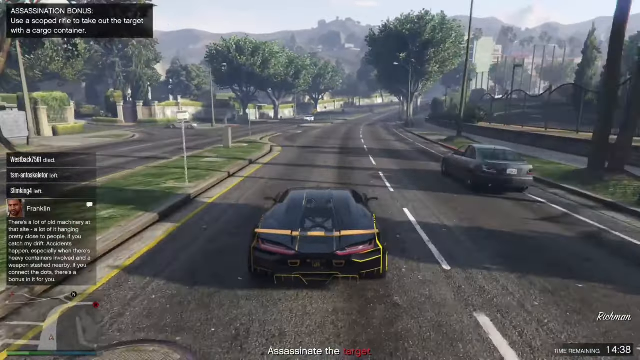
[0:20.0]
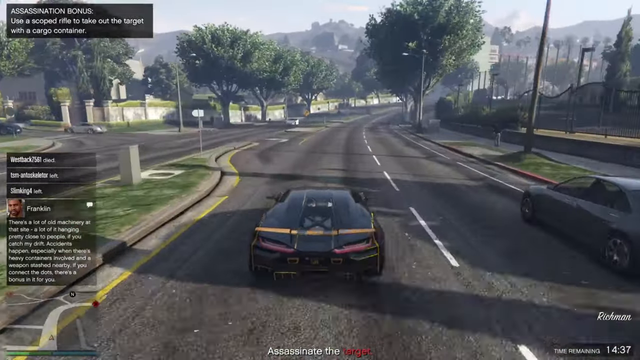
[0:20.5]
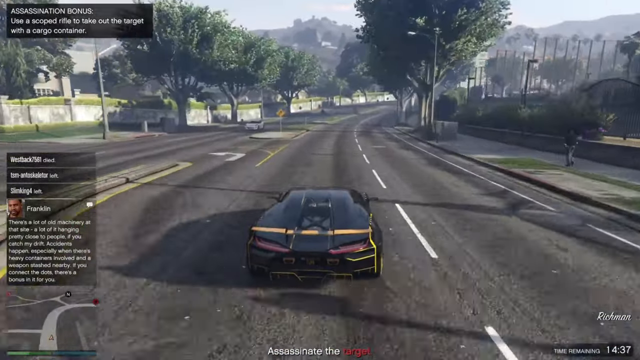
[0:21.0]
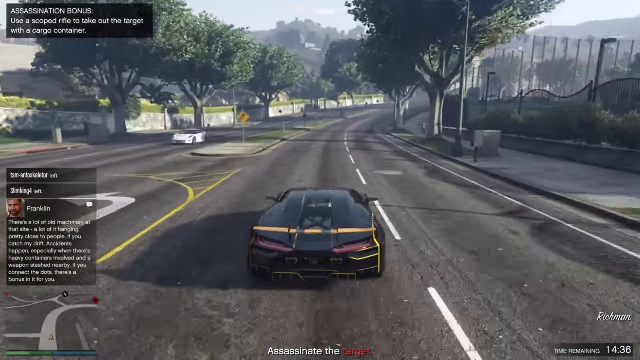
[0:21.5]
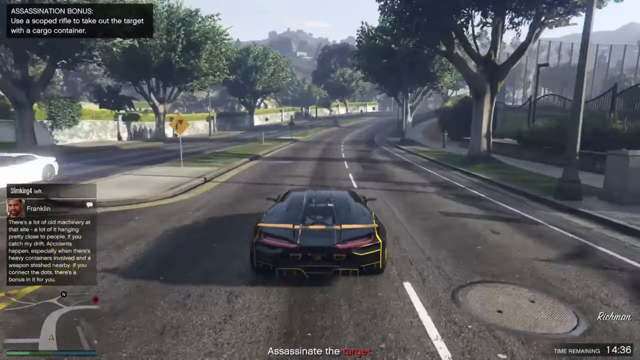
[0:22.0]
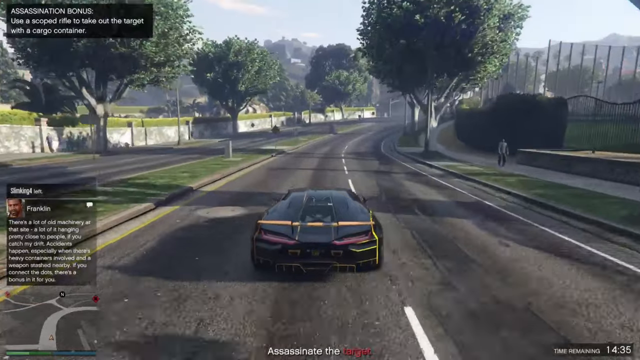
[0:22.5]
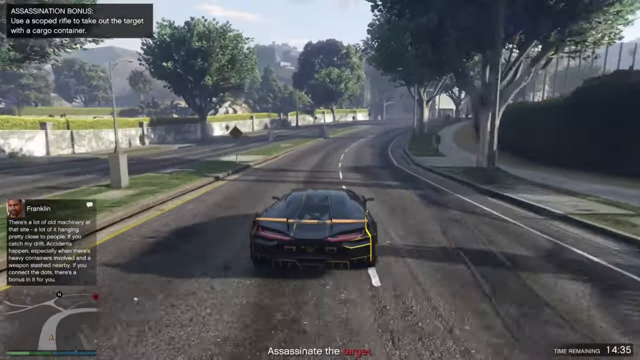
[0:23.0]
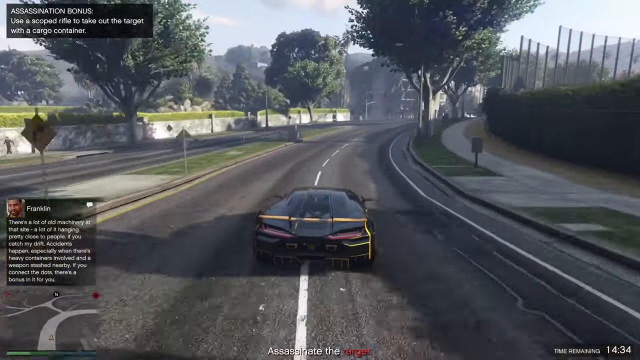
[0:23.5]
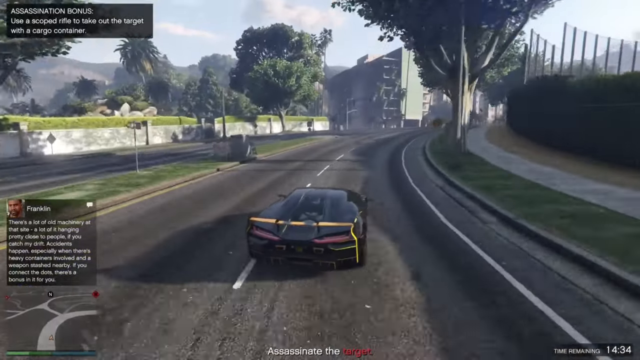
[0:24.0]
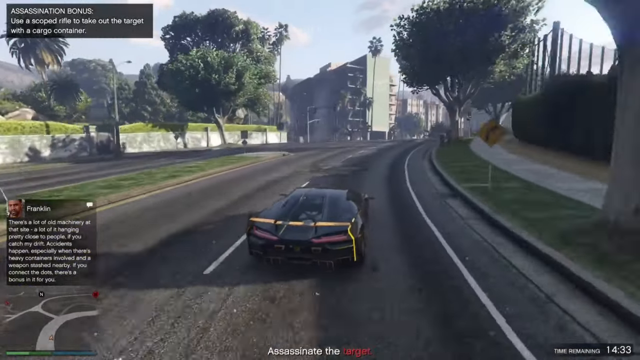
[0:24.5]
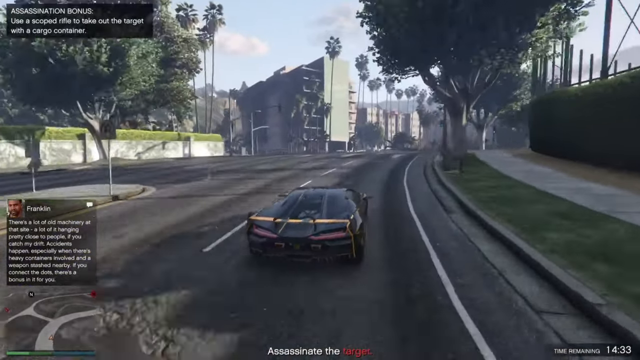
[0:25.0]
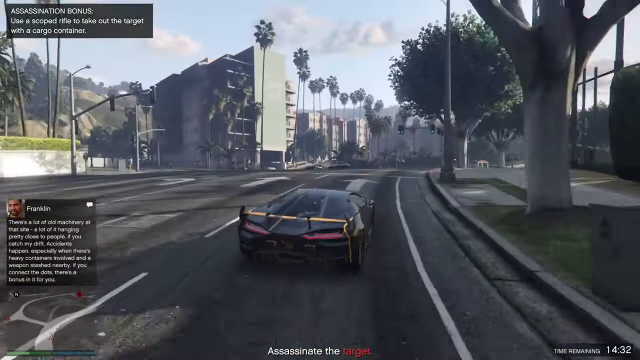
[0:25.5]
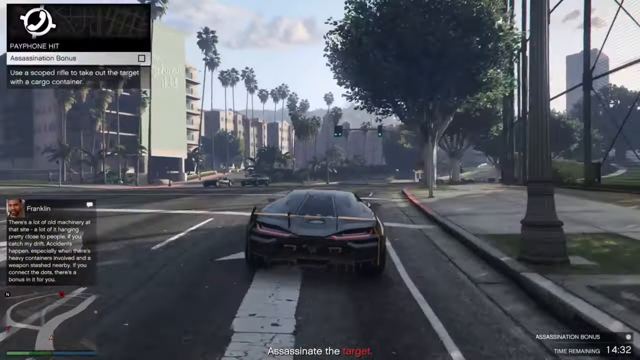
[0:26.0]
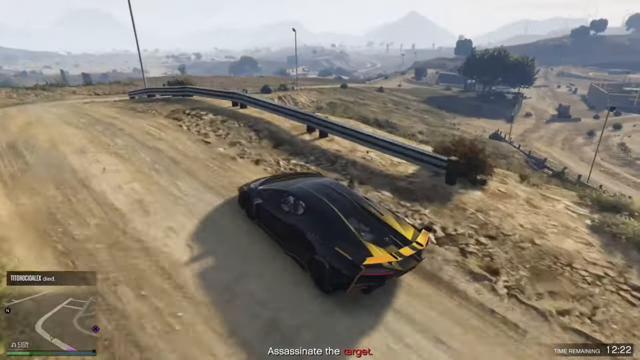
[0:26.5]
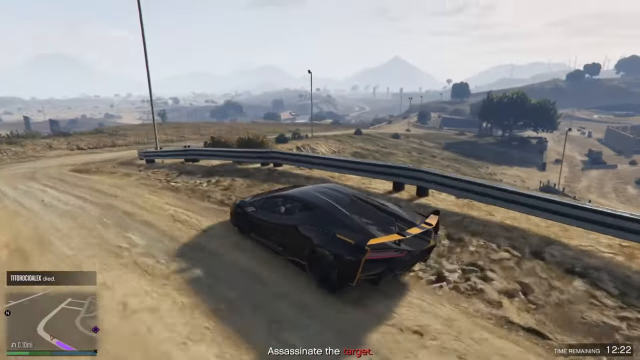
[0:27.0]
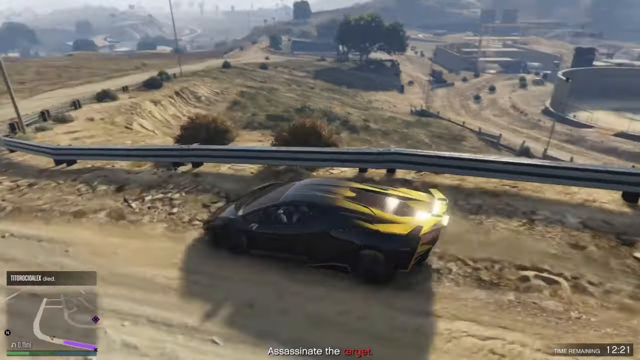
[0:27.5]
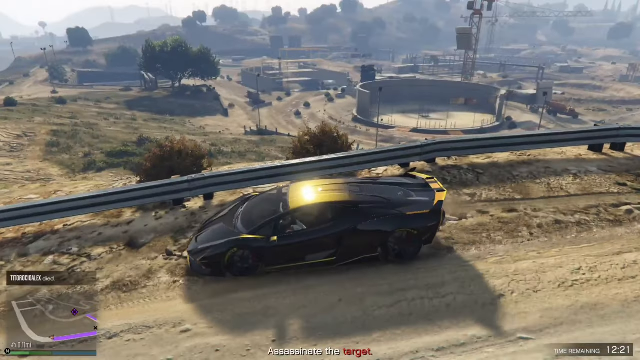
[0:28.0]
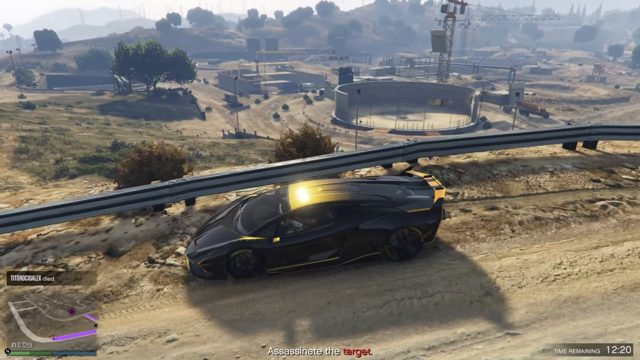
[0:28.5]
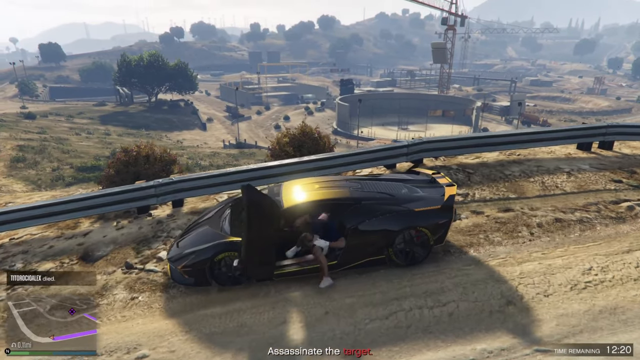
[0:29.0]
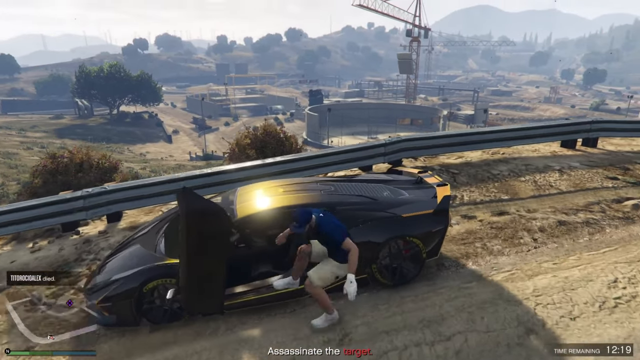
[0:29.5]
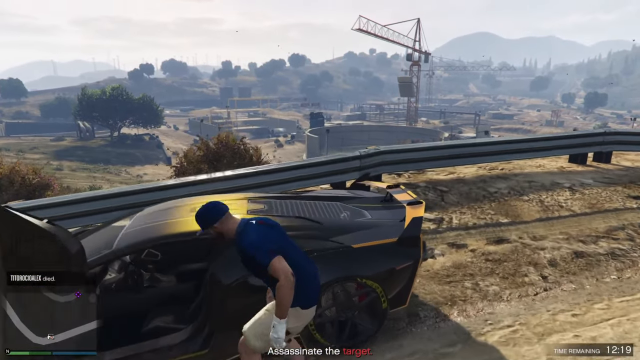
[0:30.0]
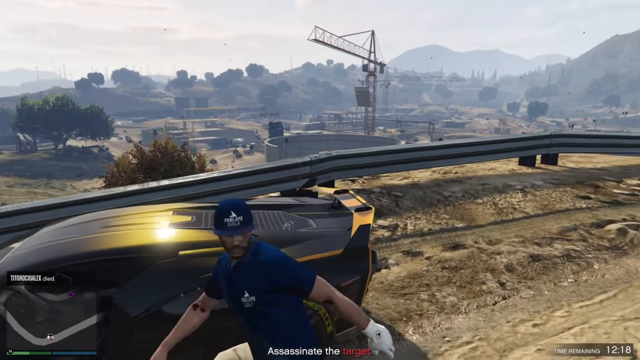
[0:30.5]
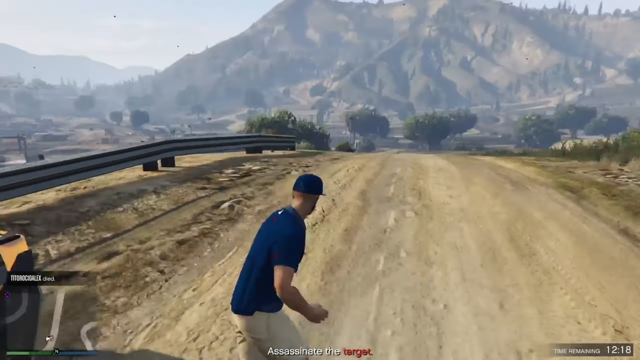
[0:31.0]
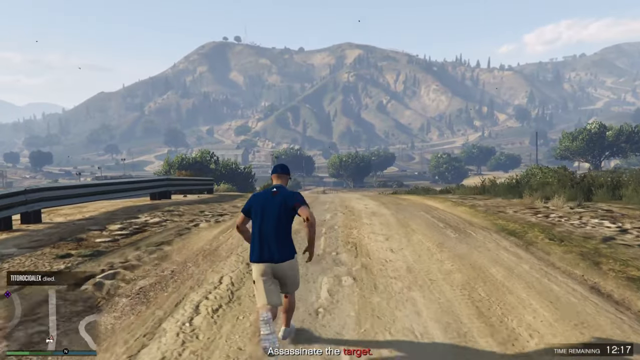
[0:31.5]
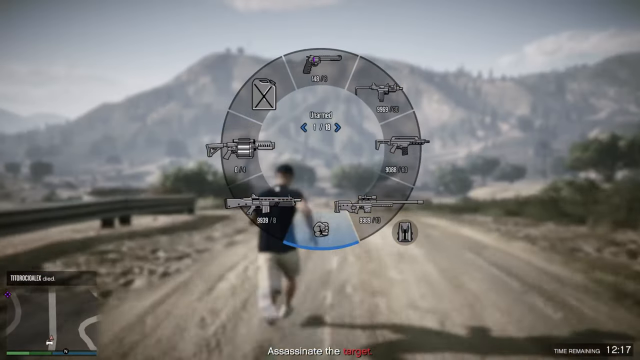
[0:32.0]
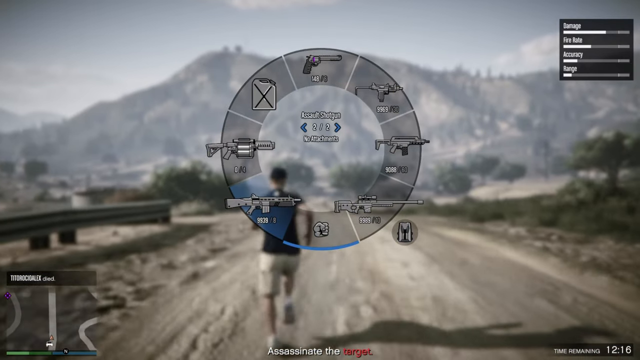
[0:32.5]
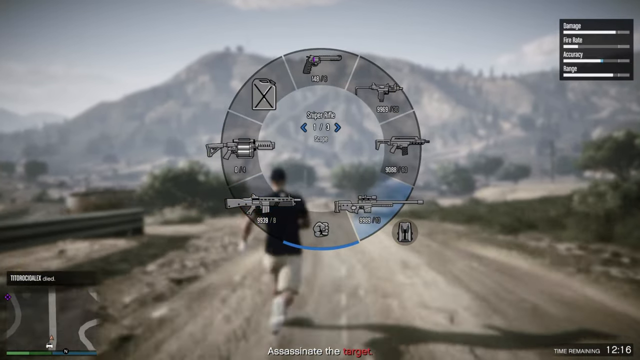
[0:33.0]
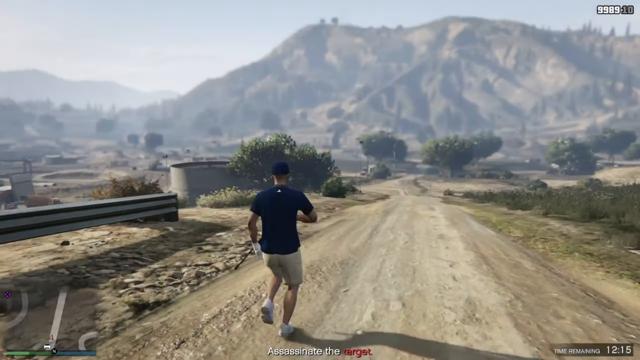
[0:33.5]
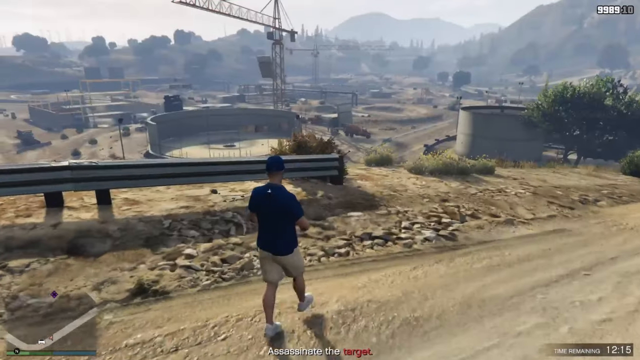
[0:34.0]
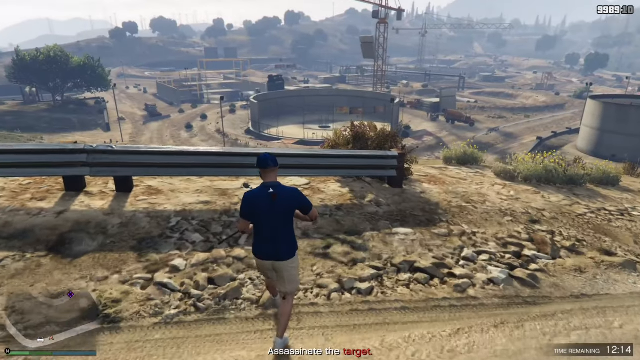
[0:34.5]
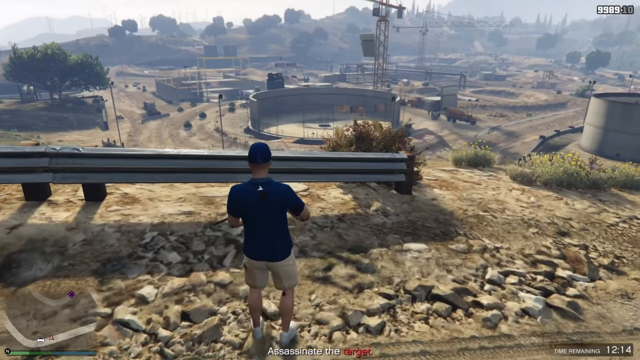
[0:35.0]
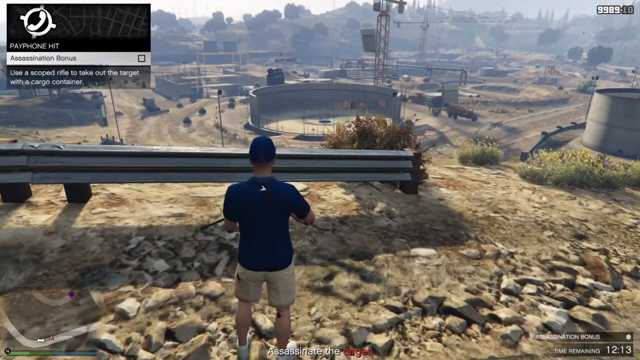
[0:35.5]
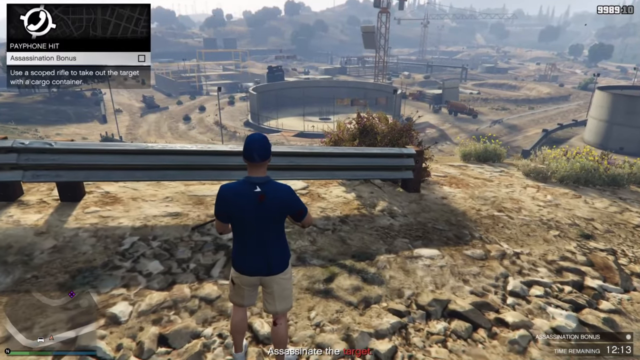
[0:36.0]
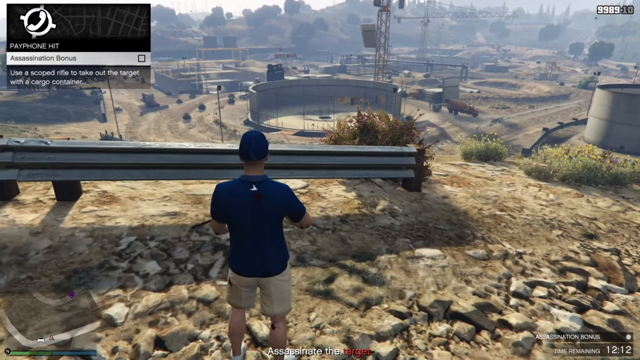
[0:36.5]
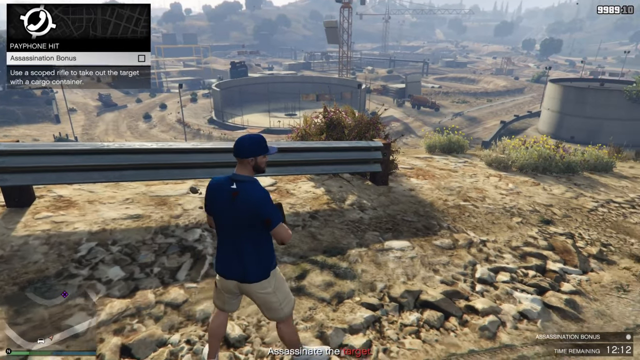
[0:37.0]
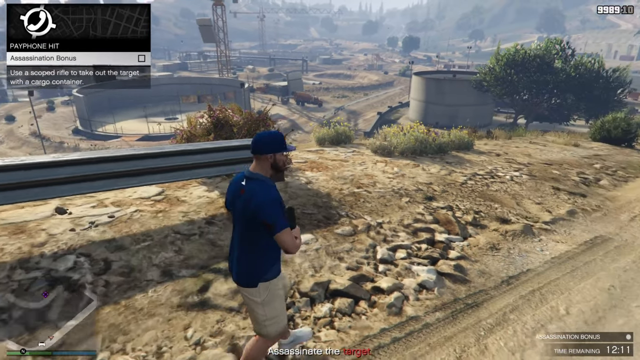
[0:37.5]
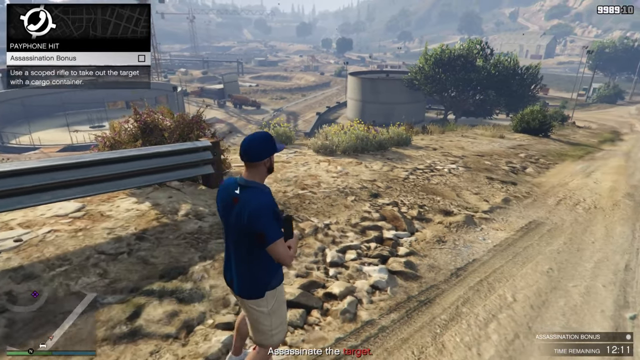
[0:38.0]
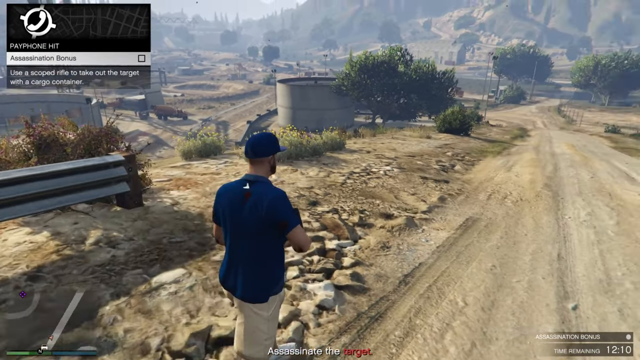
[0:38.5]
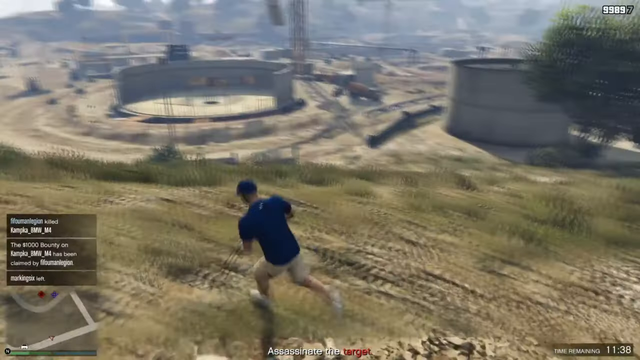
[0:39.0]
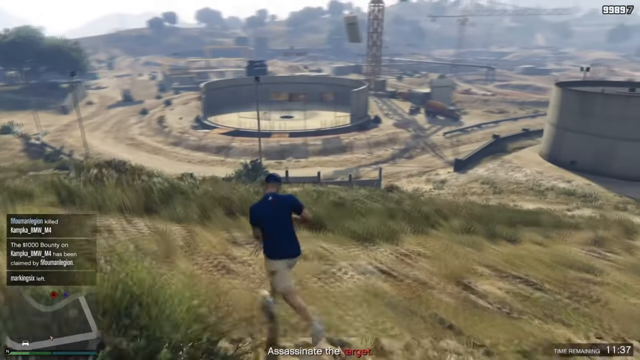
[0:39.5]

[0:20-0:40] In a street setting during the daytime, the person drives on the left side of the street while someone walks on the sidewalk to the right. Very large green trees line both the left and right sides of the street. The car is black and yellow and very luxurious, kind of like a Lamborghini. The scene changes to the person driving into a sort of dirt area. The person exits the vehicle, wearing brown shorts, a blue shirt, and a blue hat. A pop-up appears, kind of like a menu of guns and different weapons, and they choose one, apparently a sniper rifle. They overlook a sort of construction area with a lot of dirt in a very brownish color. A pop-up at the top left says "payphone hint, assassination bonus. Use a scope rifle to take out the target with a cargo container." The person kind of walks down the dirt area before the scene switches to what looks like sped-up footage of the person running on a hill.